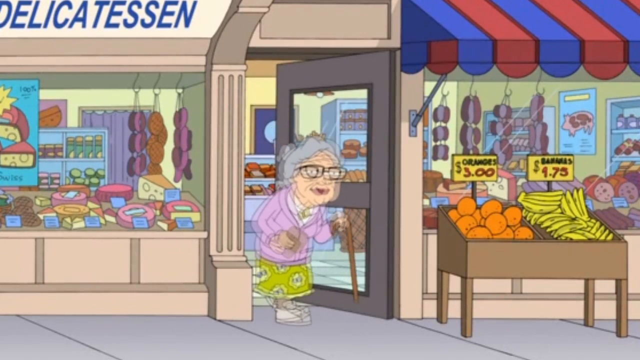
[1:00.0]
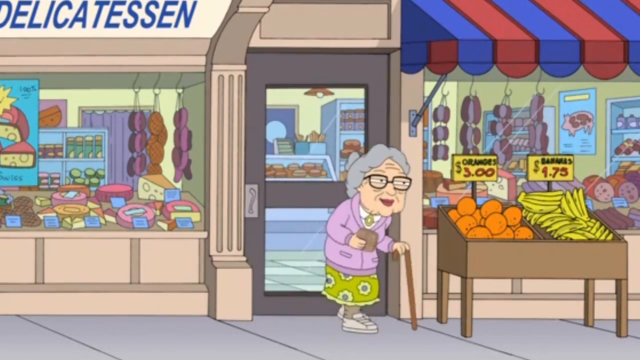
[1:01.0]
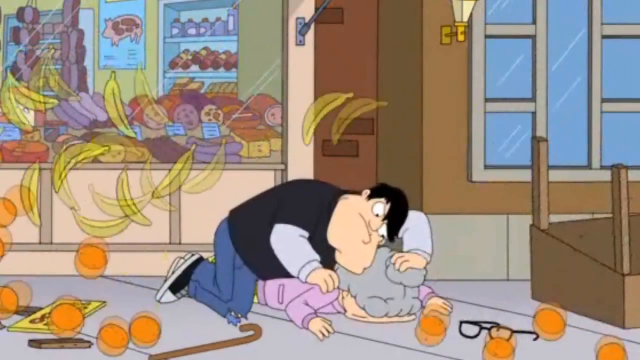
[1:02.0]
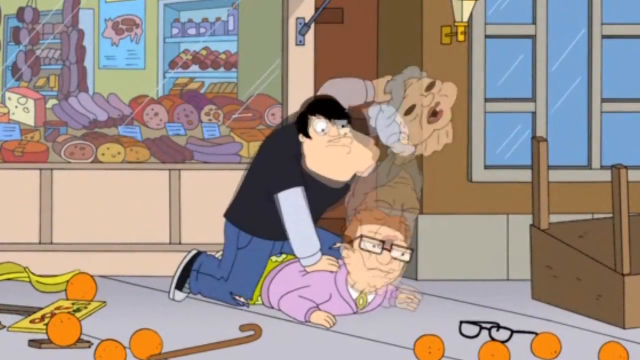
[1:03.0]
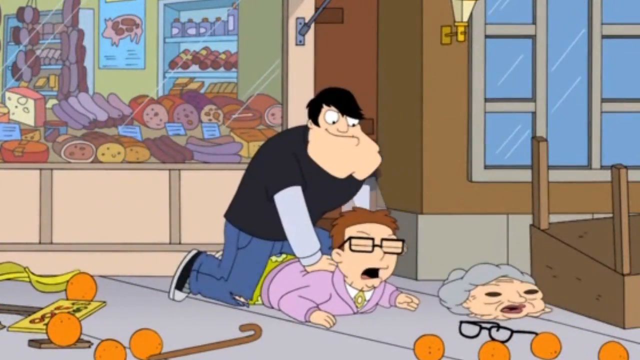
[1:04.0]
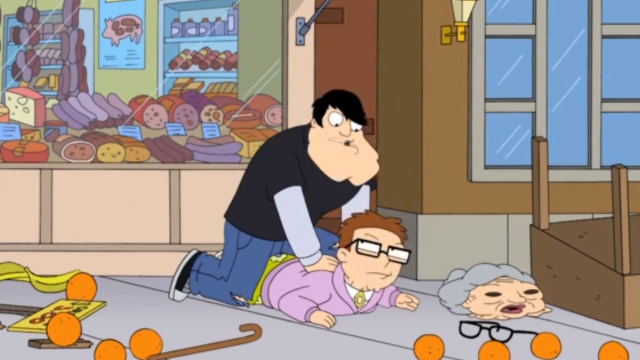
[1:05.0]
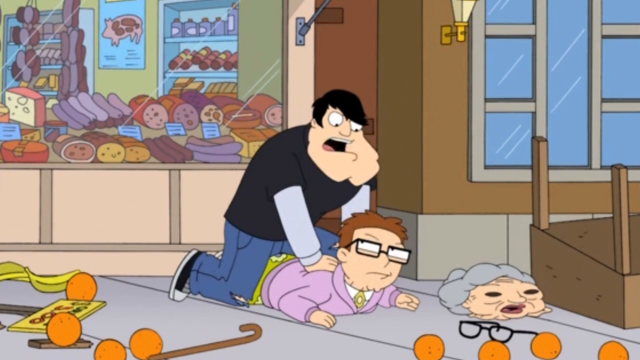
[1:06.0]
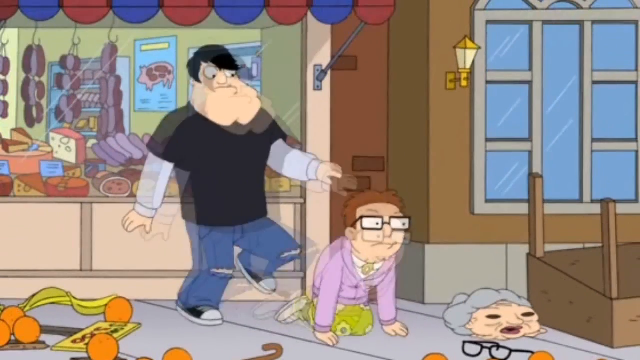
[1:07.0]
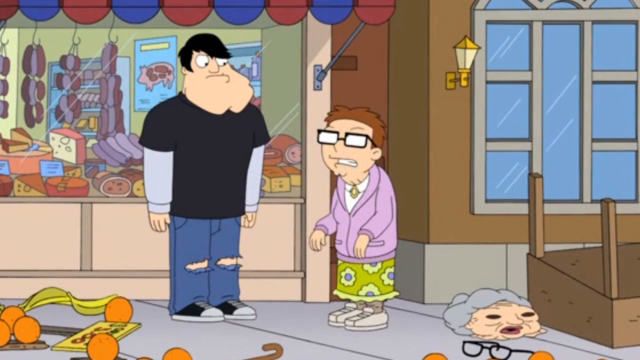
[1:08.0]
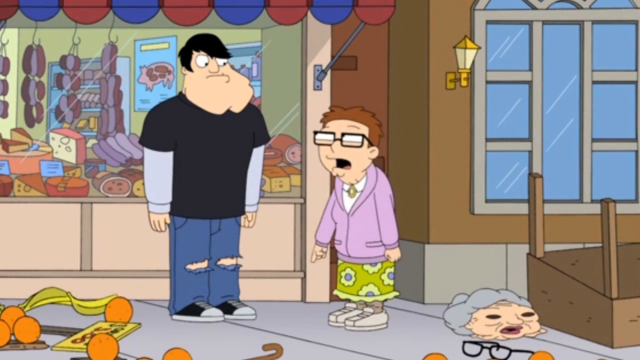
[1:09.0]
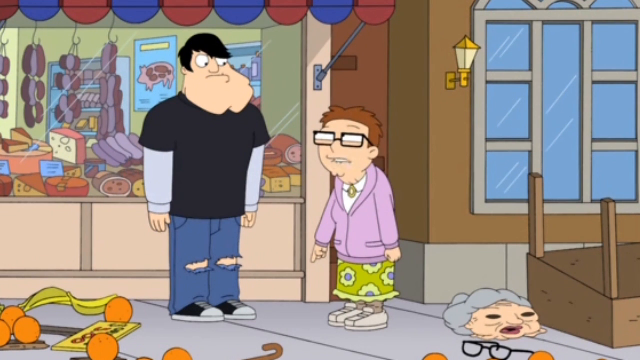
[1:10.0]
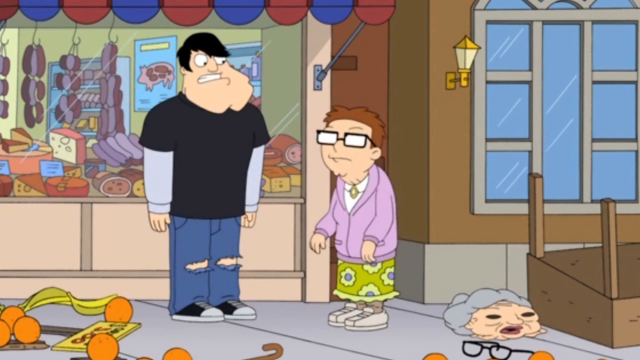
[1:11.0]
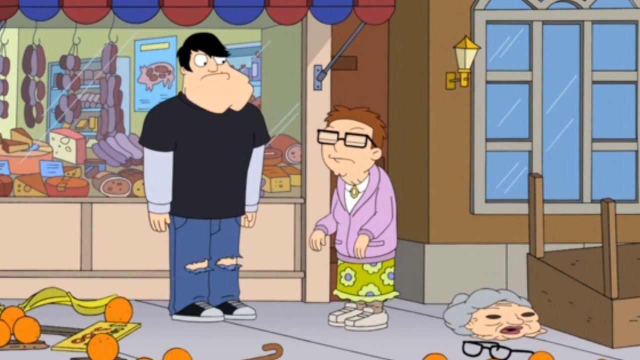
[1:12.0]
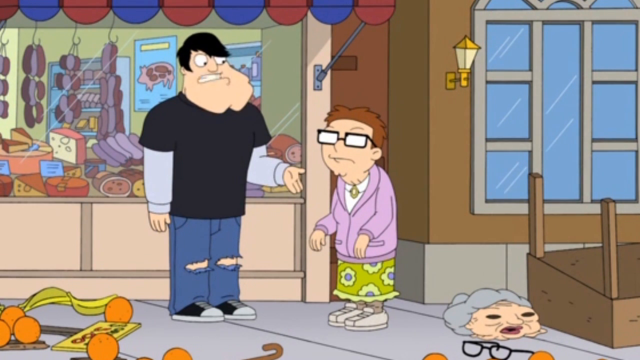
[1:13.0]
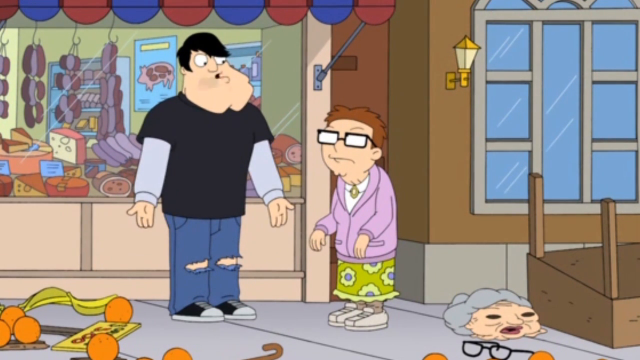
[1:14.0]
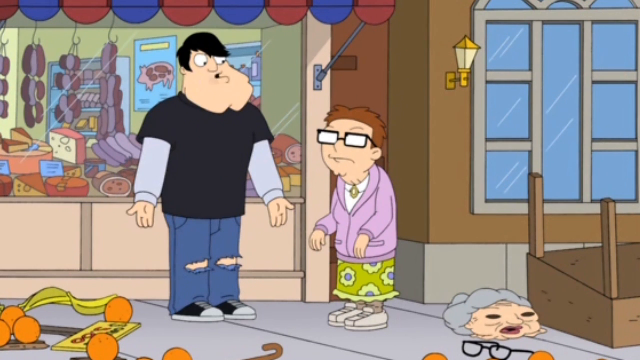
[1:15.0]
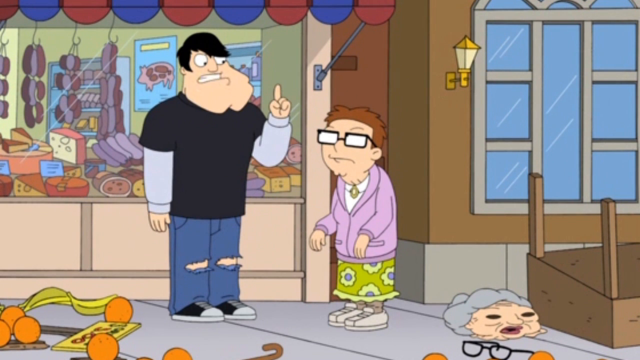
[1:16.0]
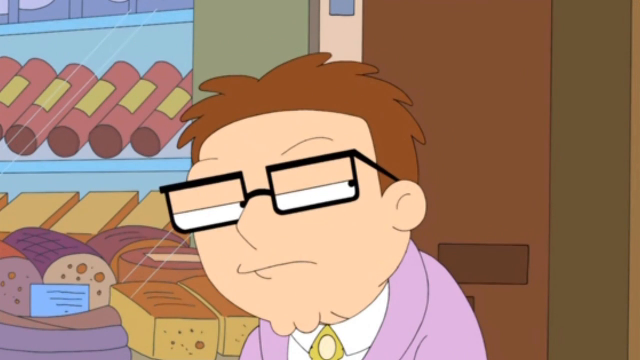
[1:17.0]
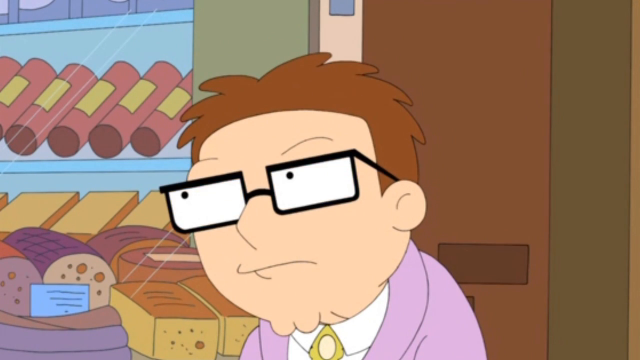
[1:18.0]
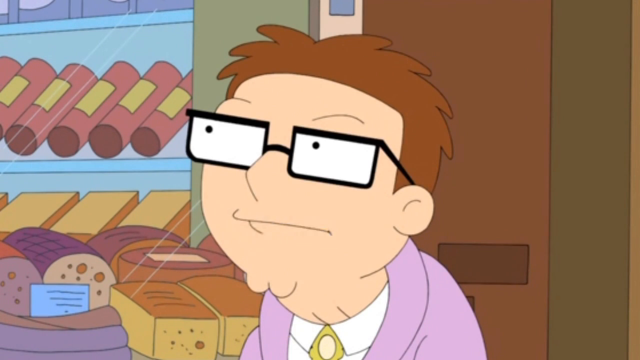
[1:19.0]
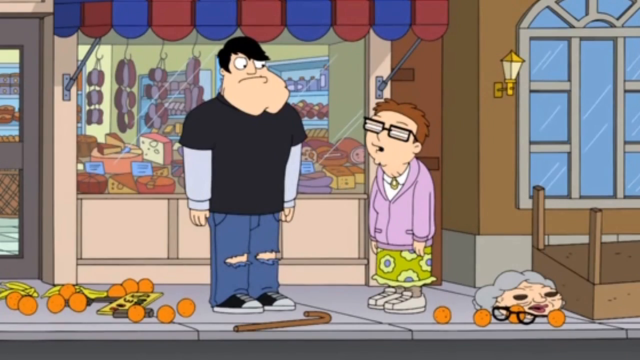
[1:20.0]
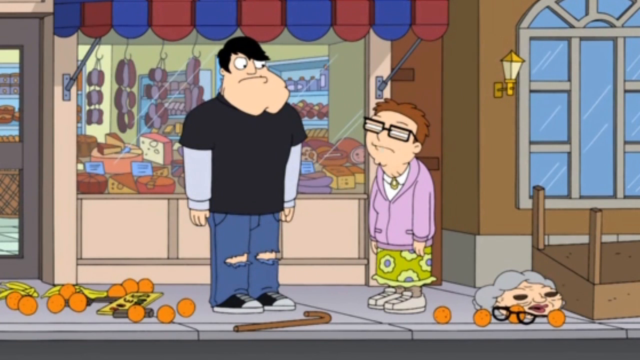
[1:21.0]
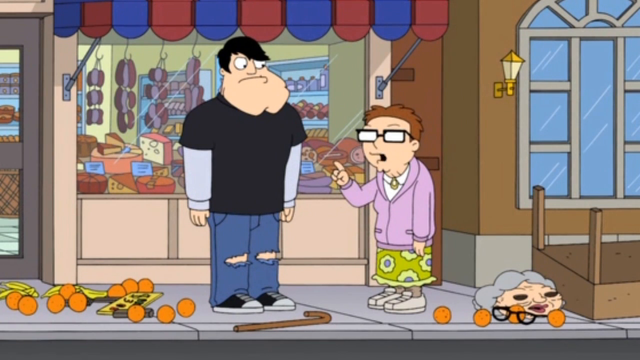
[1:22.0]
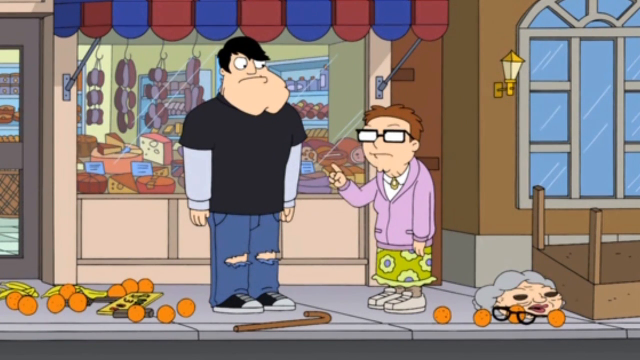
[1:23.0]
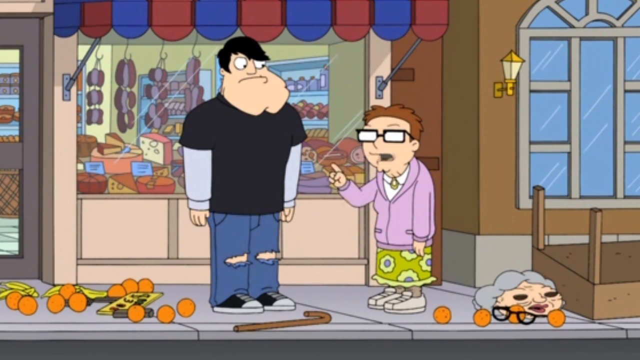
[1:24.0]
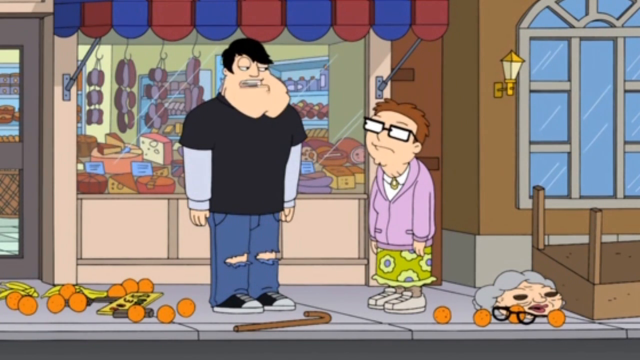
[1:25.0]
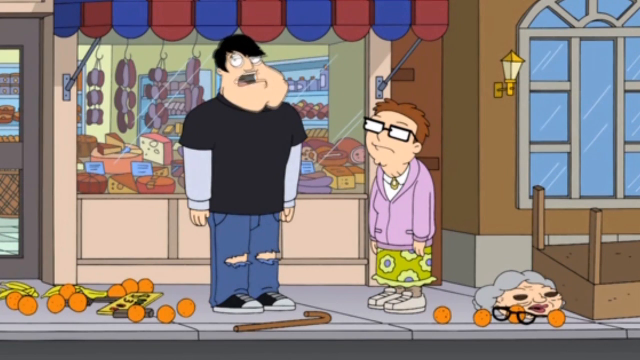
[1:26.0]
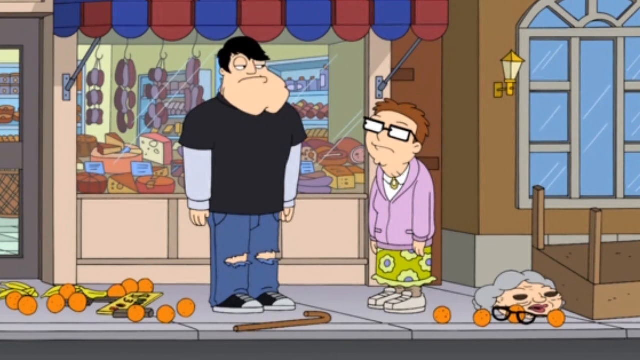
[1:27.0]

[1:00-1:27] The woman walks out of the deli with her cheese, and a thug jumps behind her and on top of her, ripping off her mask. Underneath is a boy or young man with glasses. He gets up and interacts with the bully, who is taller and bigger than him, and they have a discussion. The bully lifts up one finger, then the view pans to the young man, who is thinking. He raises a finger and continues the discussion with the bully, which is where the video ends.